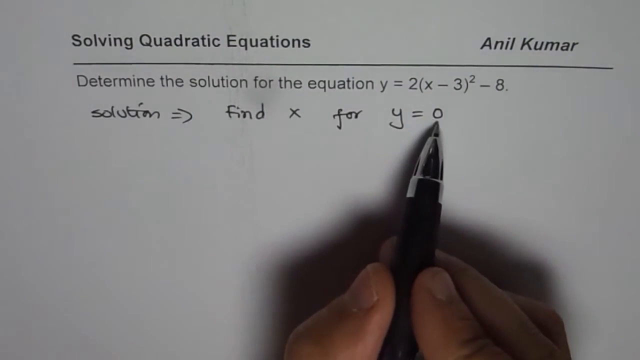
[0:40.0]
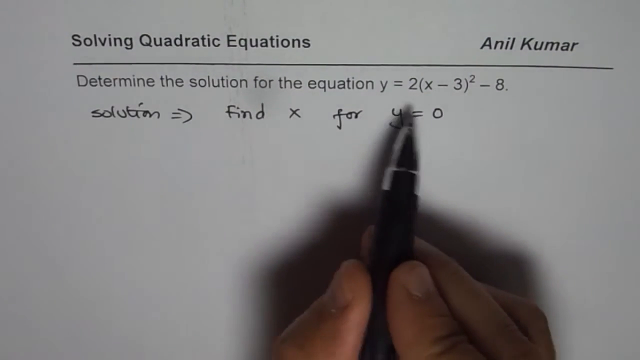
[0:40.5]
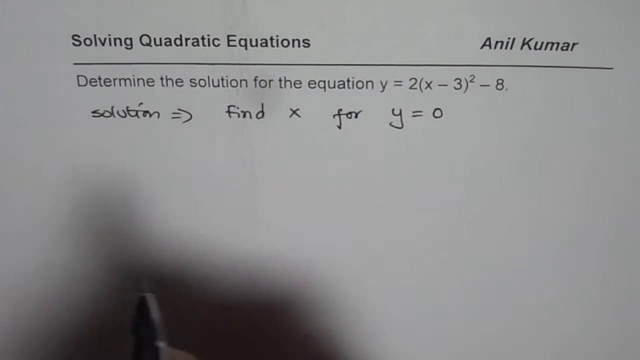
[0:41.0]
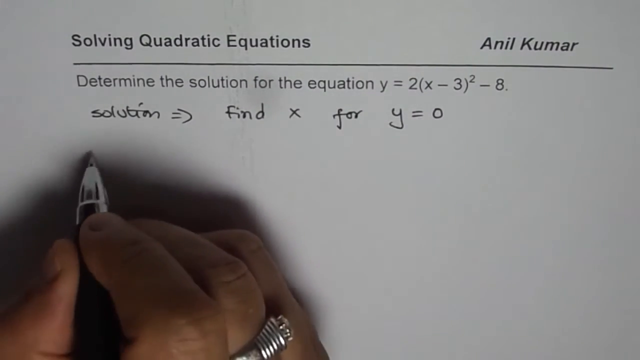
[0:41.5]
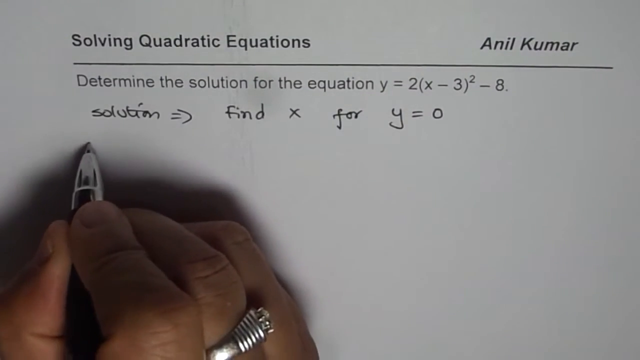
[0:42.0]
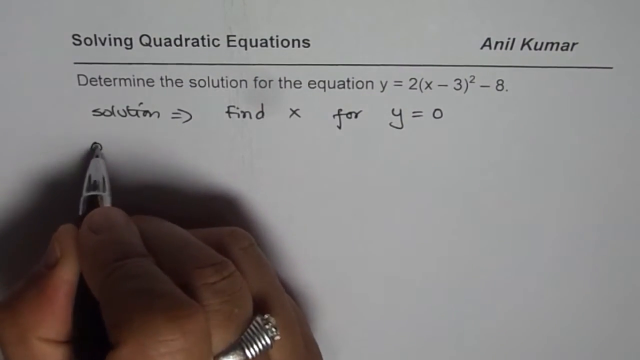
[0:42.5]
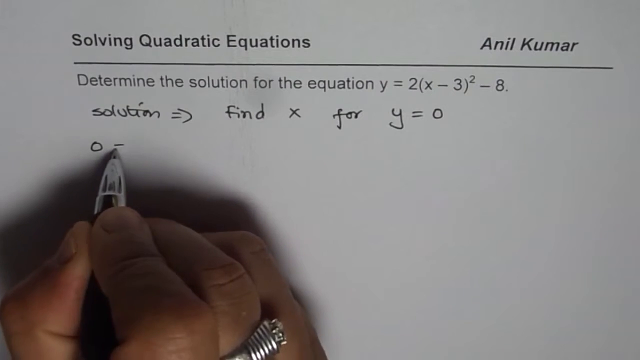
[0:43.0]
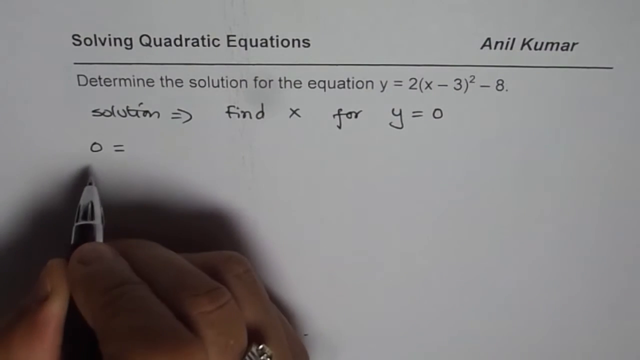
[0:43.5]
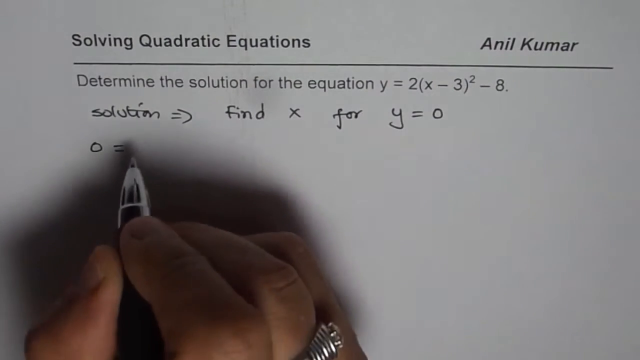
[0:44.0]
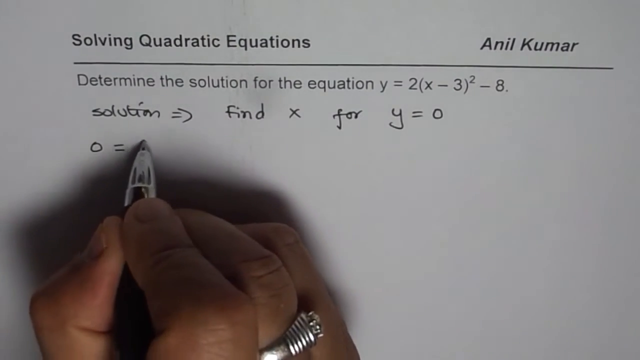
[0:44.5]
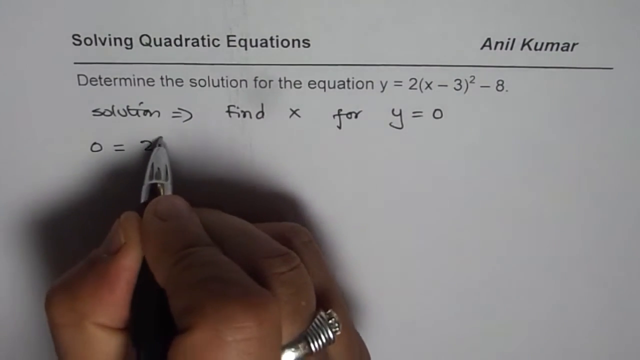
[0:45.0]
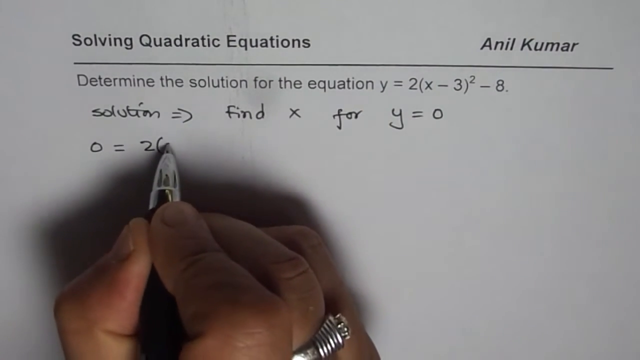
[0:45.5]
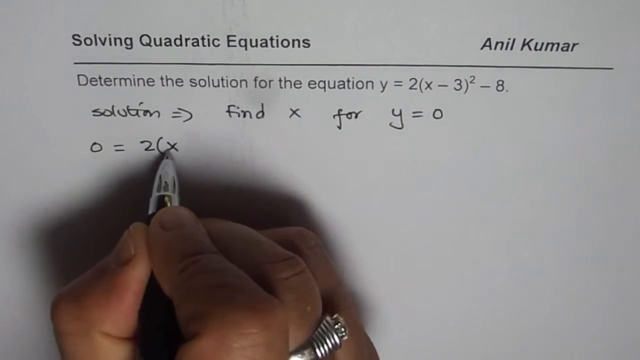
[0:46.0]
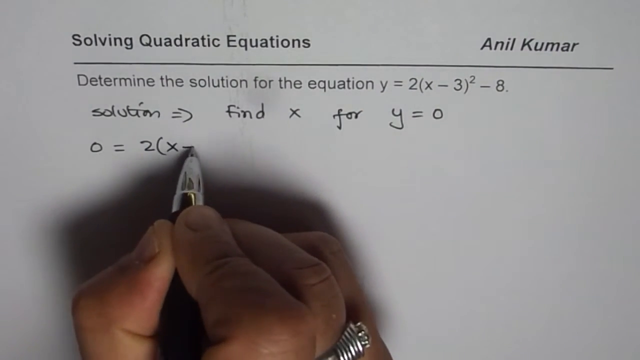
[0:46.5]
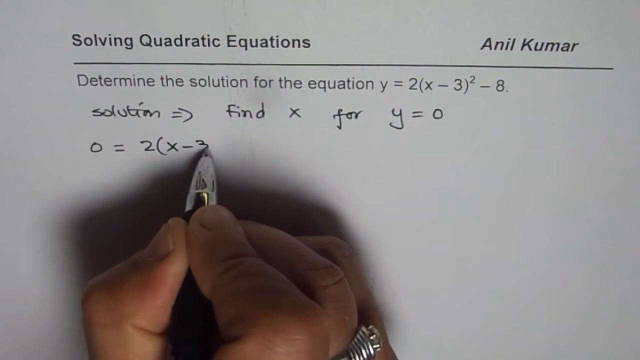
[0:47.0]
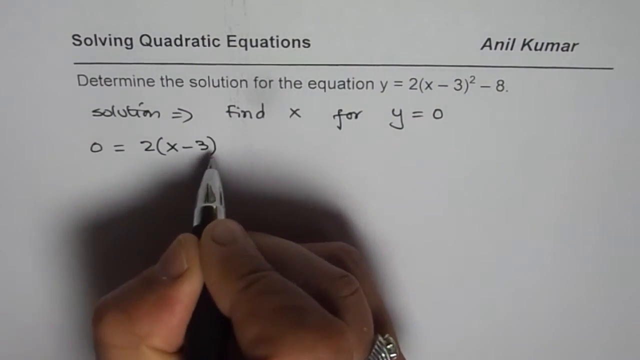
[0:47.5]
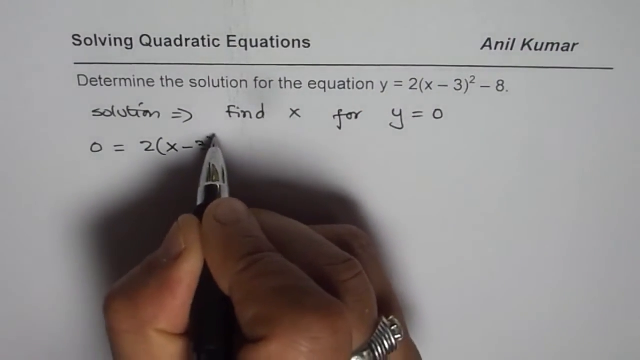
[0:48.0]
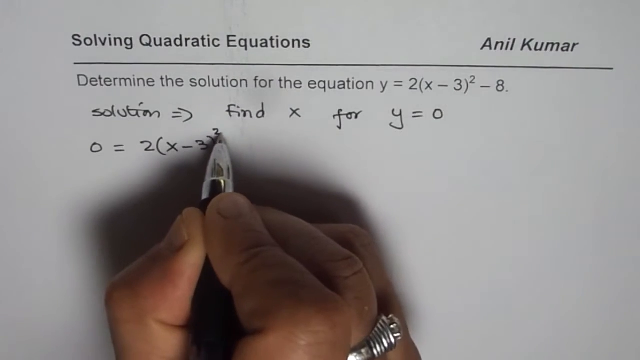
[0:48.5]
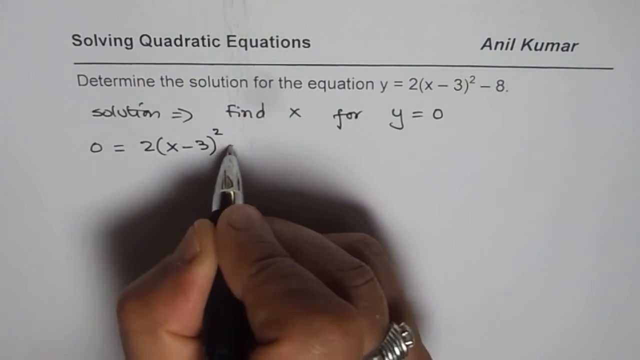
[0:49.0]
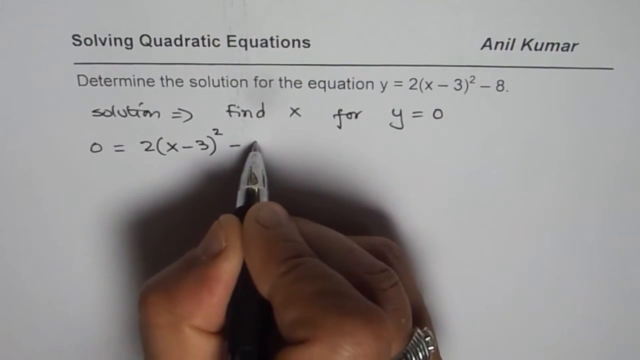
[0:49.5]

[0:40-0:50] The white paper shows "solving quadratic equations", the name, the equation "y = 2(x − 3)² − 8", and "solution = find x for y = 0". A man's hand holding a black pen and wearing a silver ring on the middle finger writes "0 = 2(x − 3)² − 8".